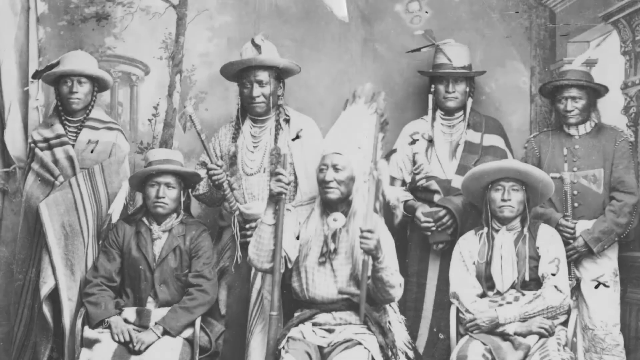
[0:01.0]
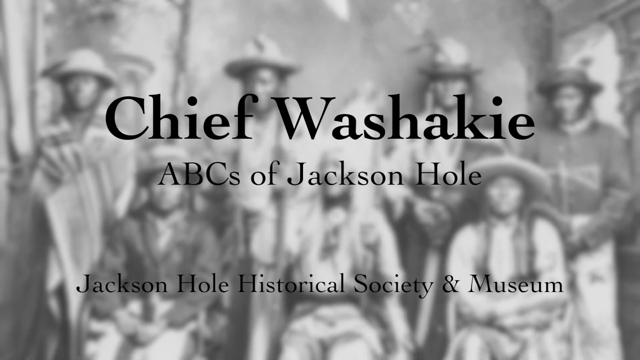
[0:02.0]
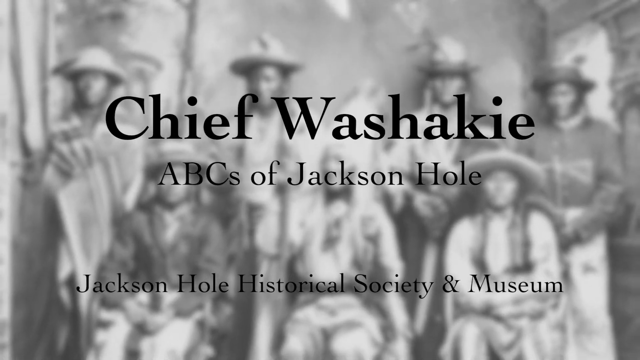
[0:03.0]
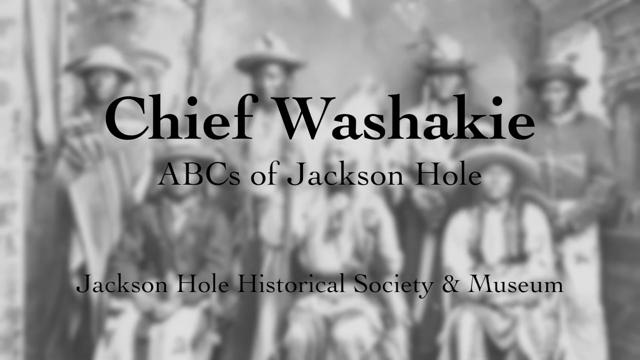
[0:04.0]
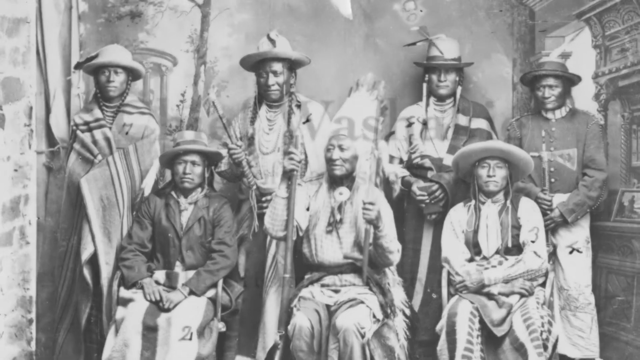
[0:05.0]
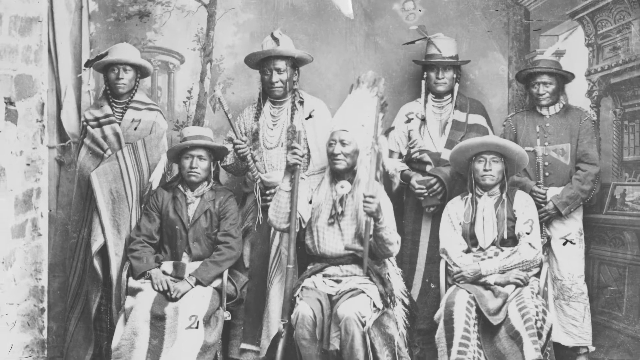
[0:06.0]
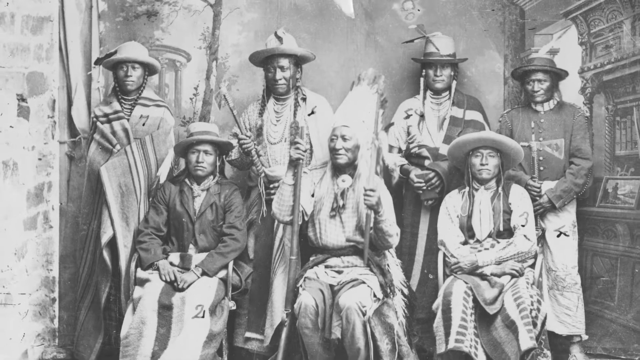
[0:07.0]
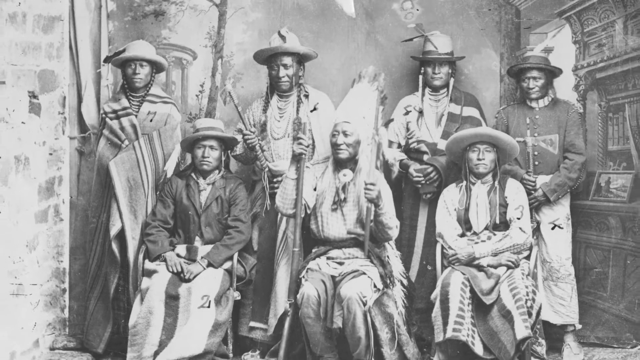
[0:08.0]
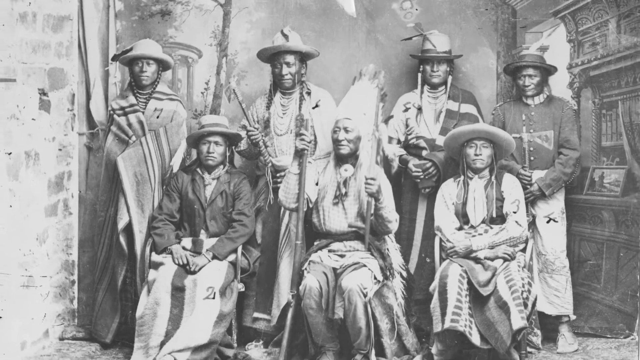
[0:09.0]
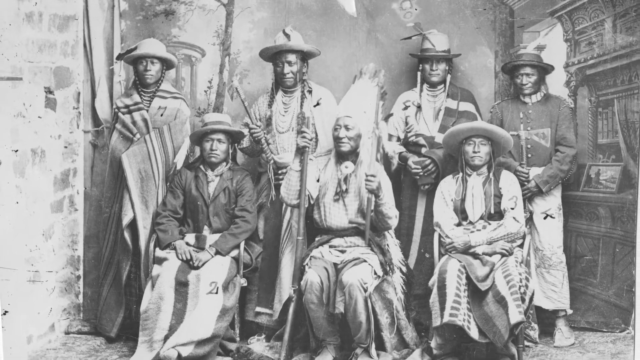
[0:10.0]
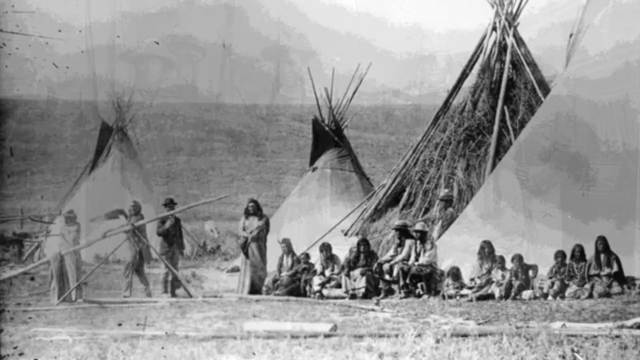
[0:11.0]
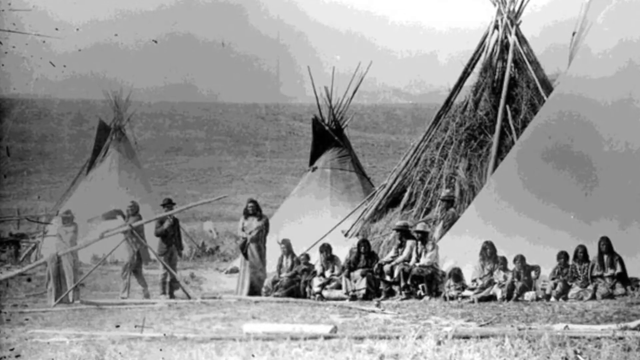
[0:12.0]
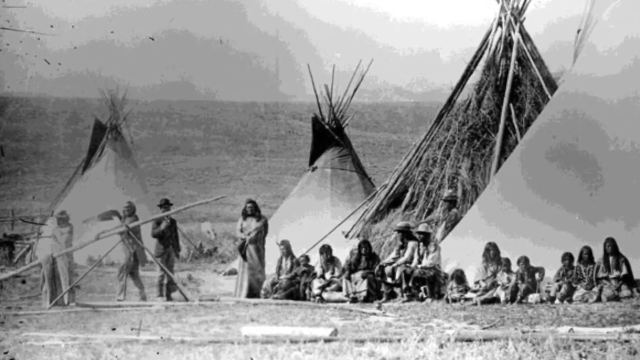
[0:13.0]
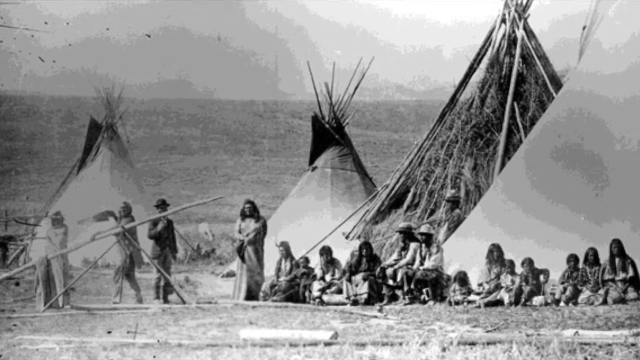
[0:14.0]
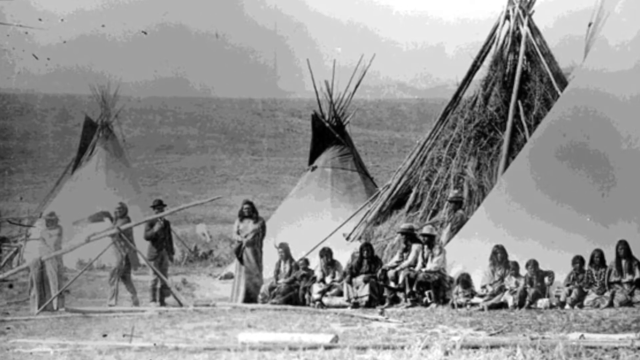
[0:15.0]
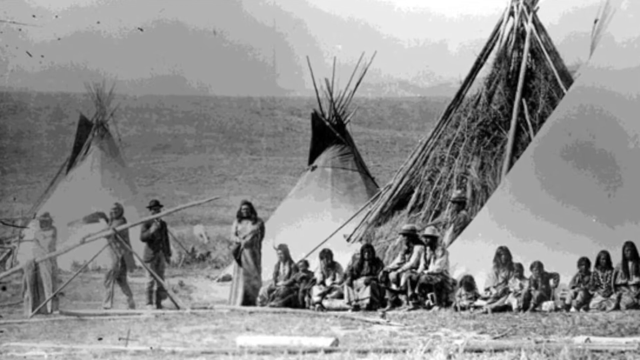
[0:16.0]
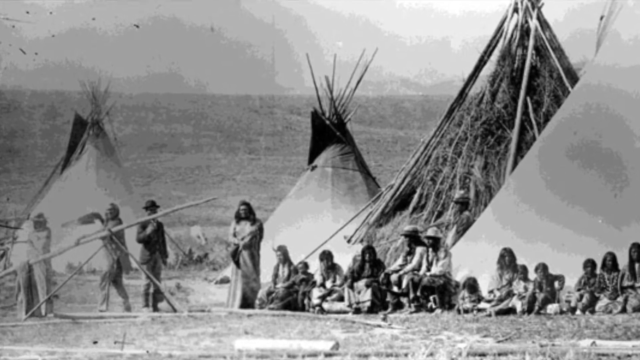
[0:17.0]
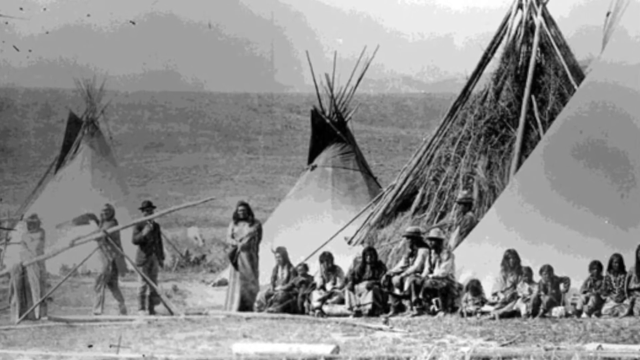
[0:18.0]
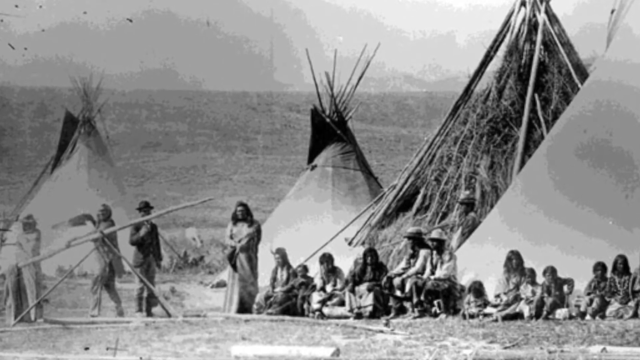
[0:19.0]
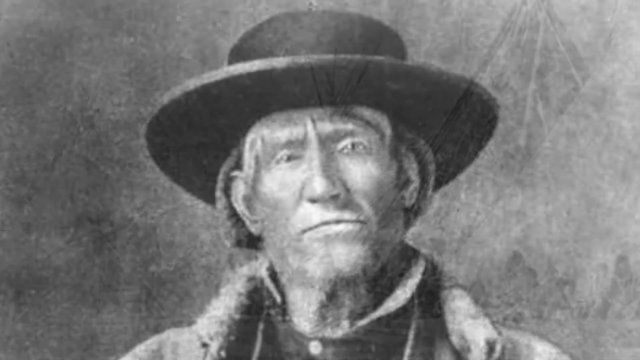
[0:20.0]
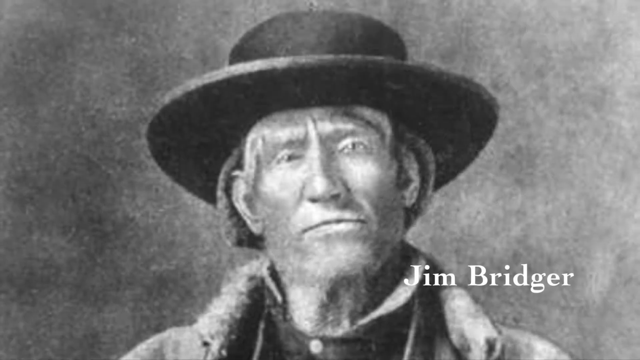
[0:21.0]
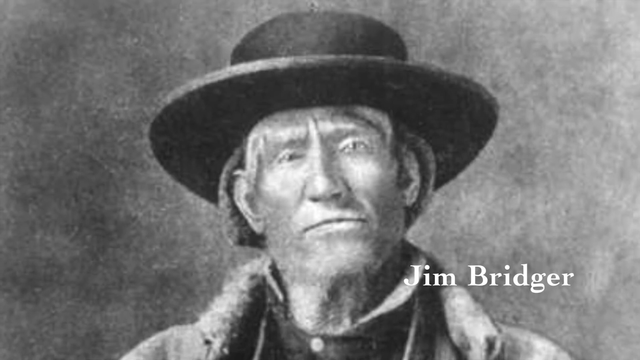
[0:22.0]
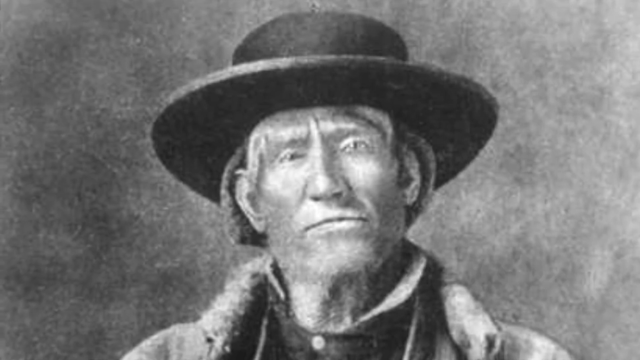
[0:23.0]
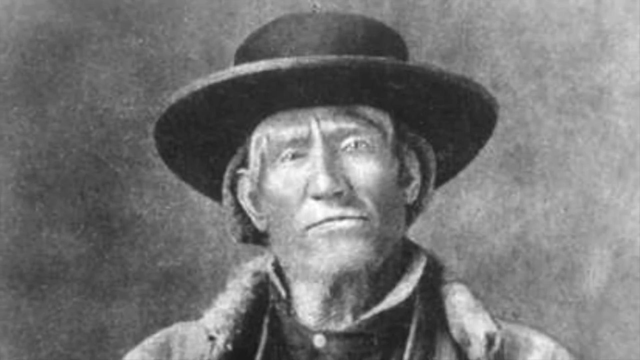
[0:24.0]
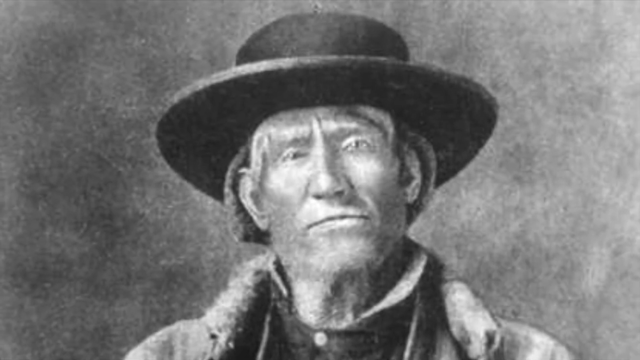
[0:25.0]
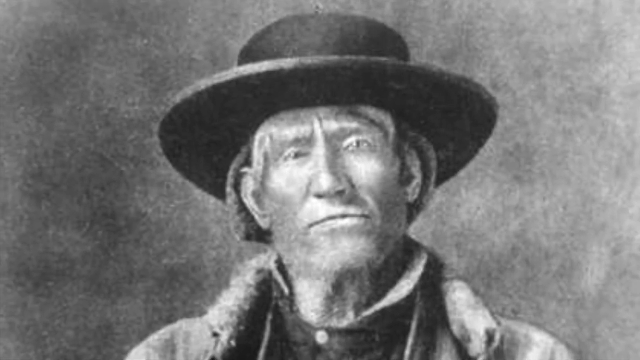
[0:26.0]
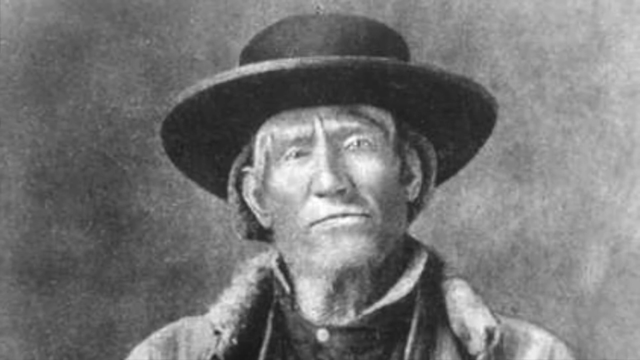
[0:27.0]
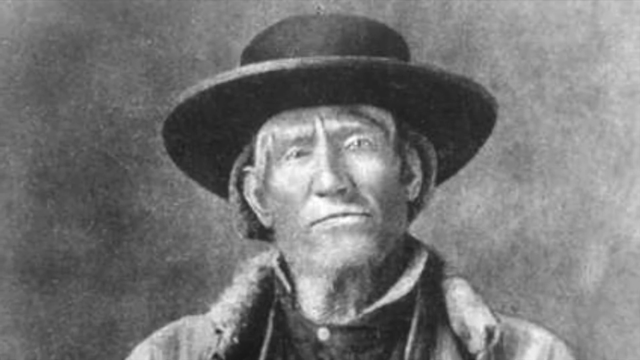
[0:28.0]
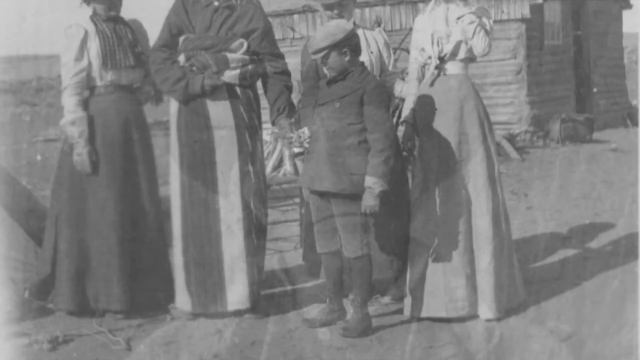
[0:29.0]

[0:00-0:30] The video shows an image of a group of Indians. On-screen text reads "Chief Washakie, ABCs of Jackson Hole, Jackson Hole Historical Society and Museum." The Indians are outfitted in their gear, and there appears to be a chief wearing his headdress, with several members of his tribe surrounding him. At least one of the Indians holds a tomahawk, and one of them, possibly the chief, appears to be holding a long rifle. The other Indians are also strapped with weapons, and they seem to be dressed in clothes made by the tribes. The scene transitions to an image of the Indians setting up and camping on their homestead area, with large teepees built and all the members of the tribe out in front of the teepees having their picture taken. The image then changes to a man named Jim Bridger.